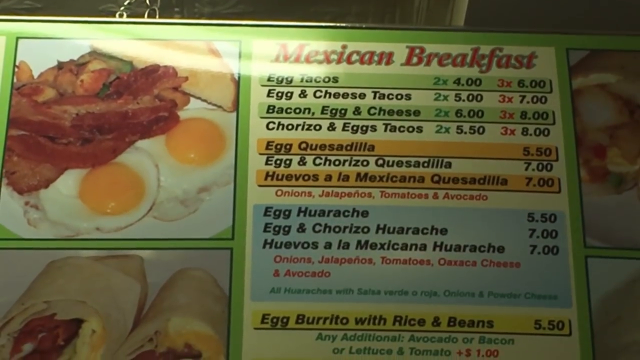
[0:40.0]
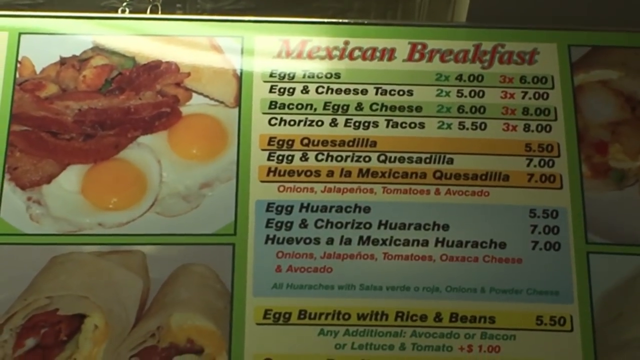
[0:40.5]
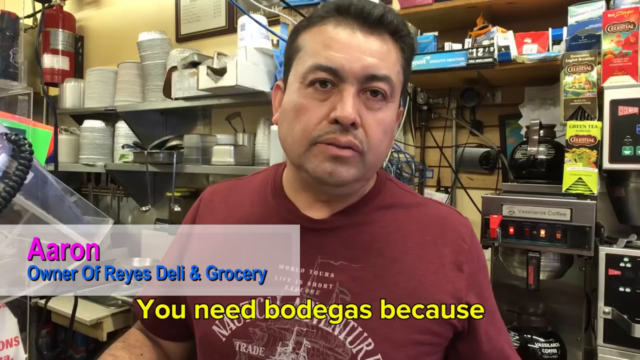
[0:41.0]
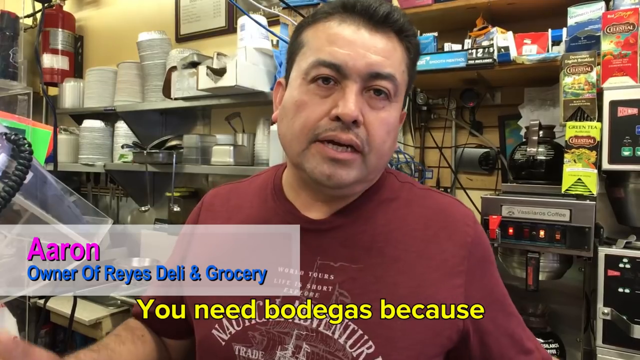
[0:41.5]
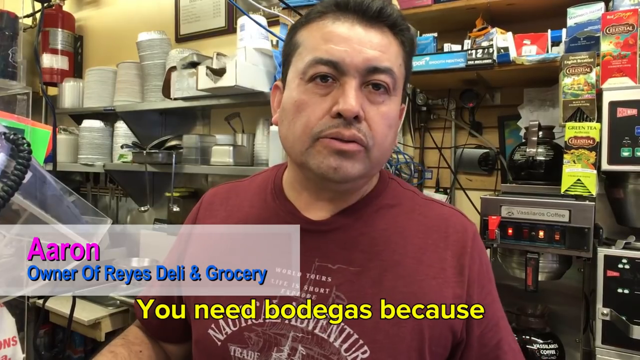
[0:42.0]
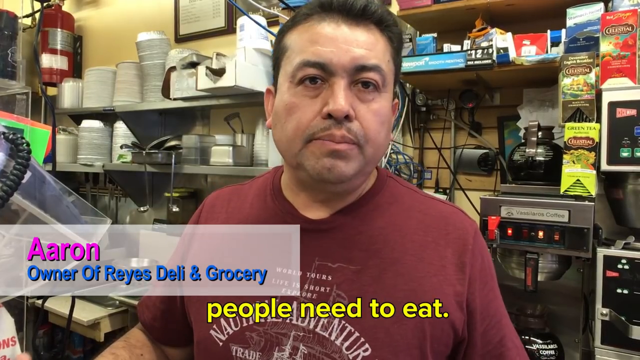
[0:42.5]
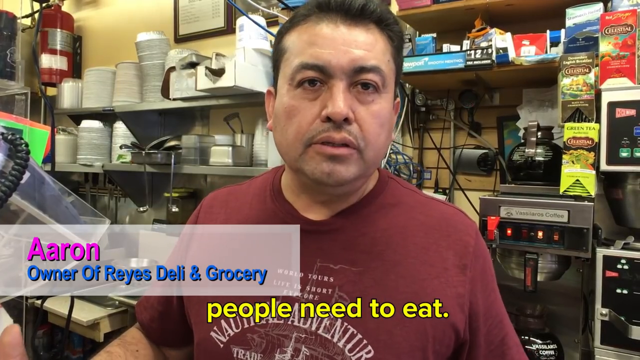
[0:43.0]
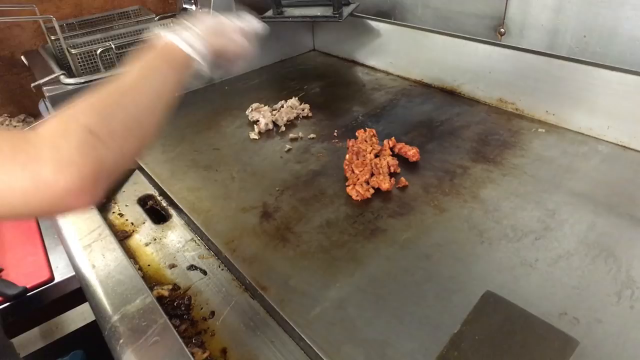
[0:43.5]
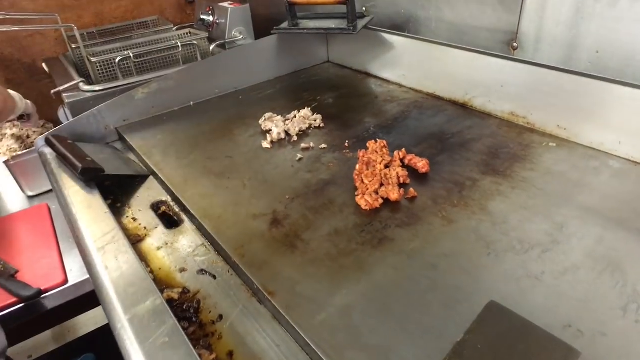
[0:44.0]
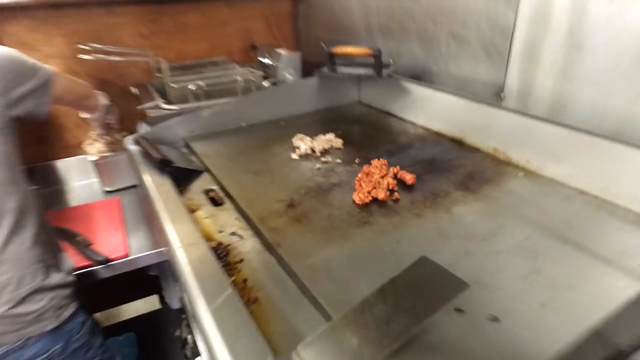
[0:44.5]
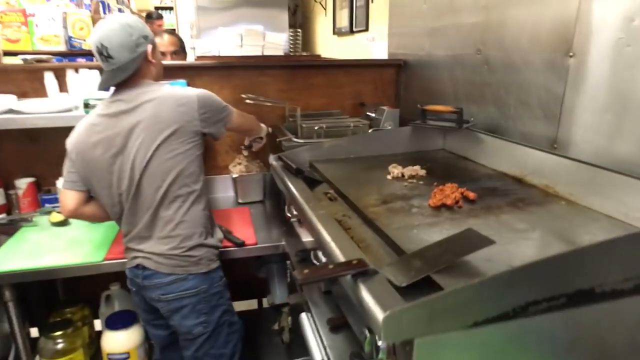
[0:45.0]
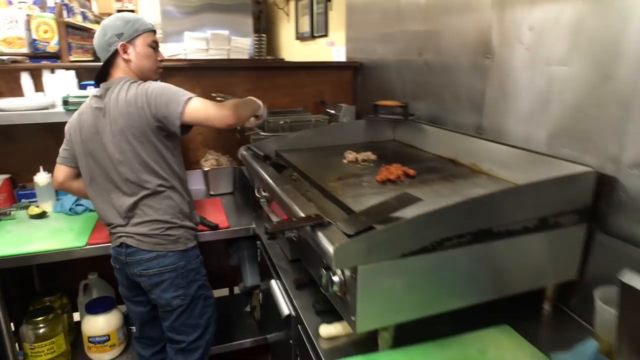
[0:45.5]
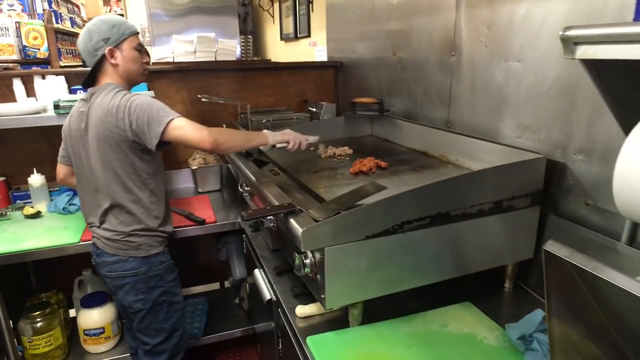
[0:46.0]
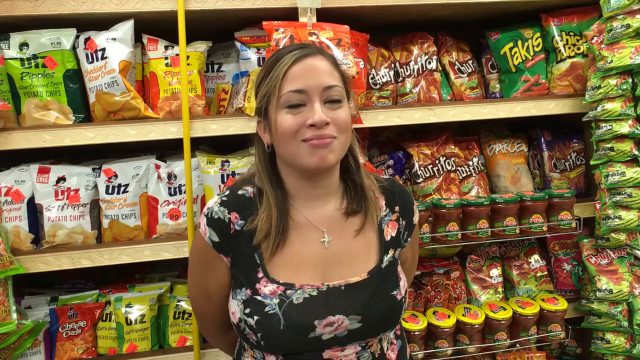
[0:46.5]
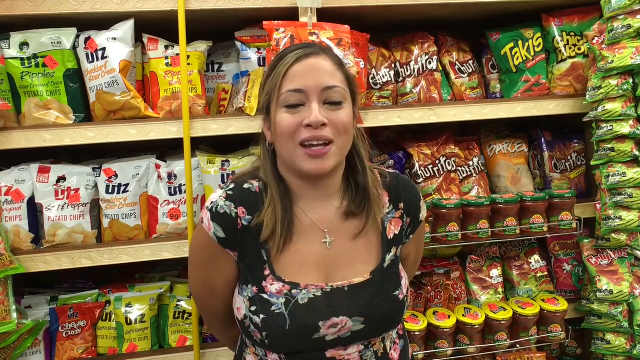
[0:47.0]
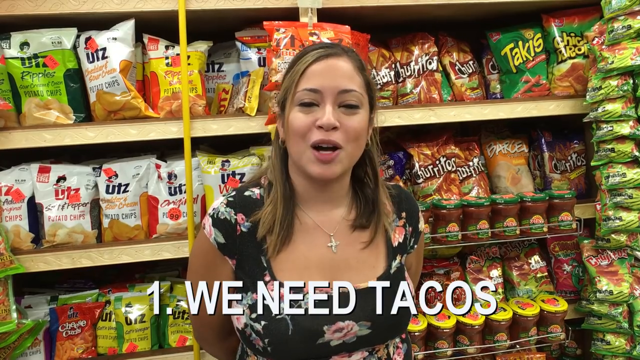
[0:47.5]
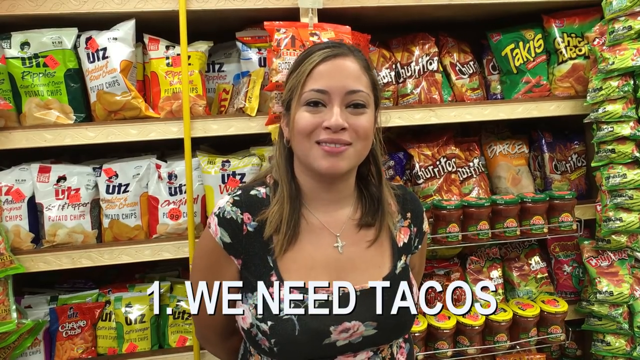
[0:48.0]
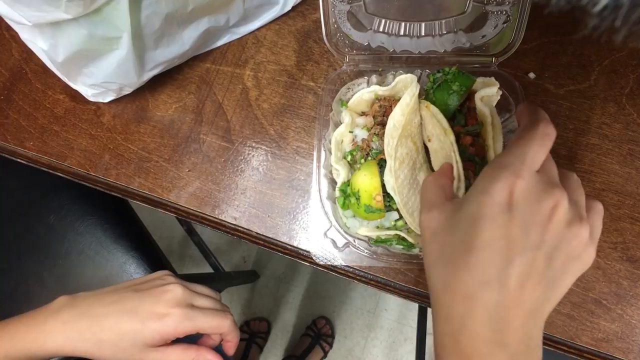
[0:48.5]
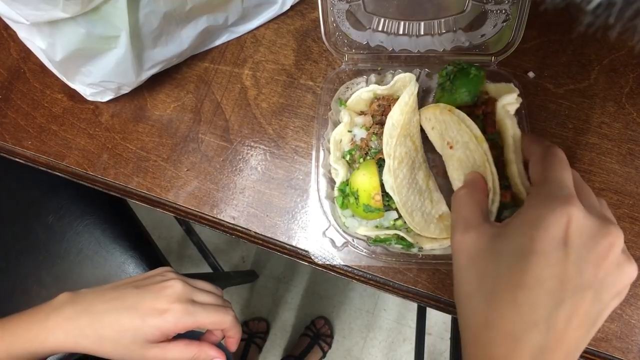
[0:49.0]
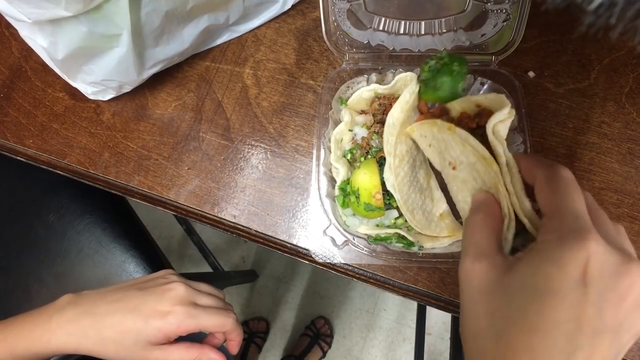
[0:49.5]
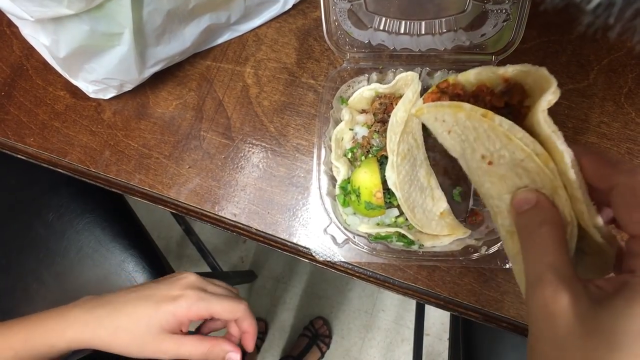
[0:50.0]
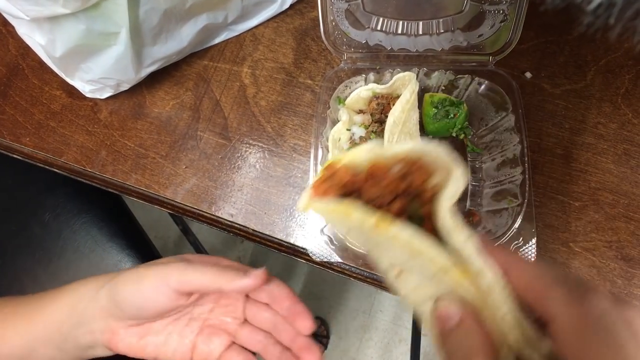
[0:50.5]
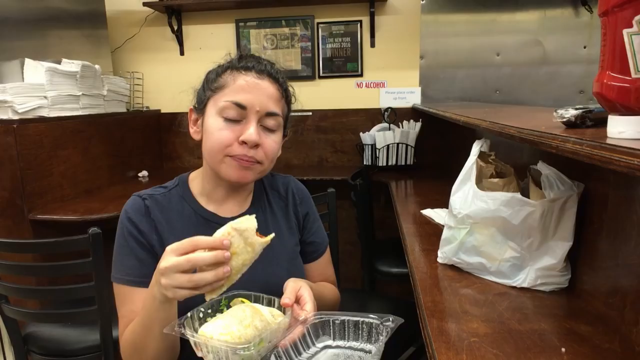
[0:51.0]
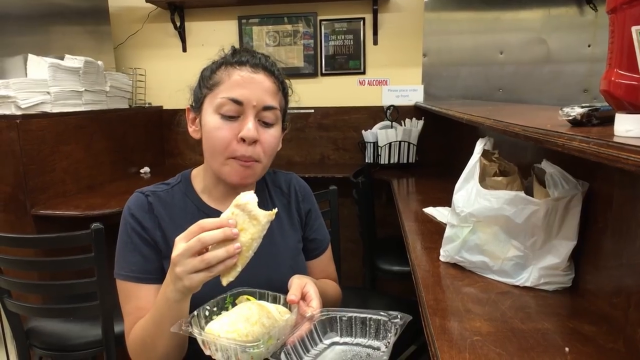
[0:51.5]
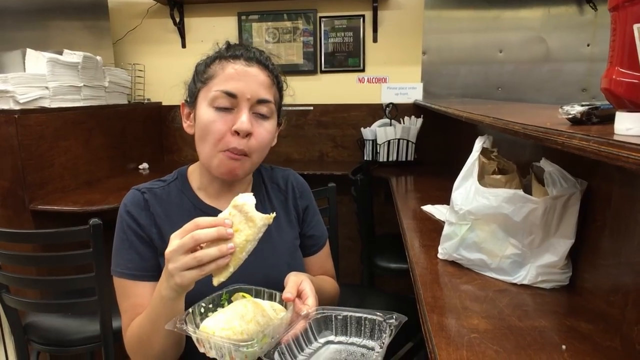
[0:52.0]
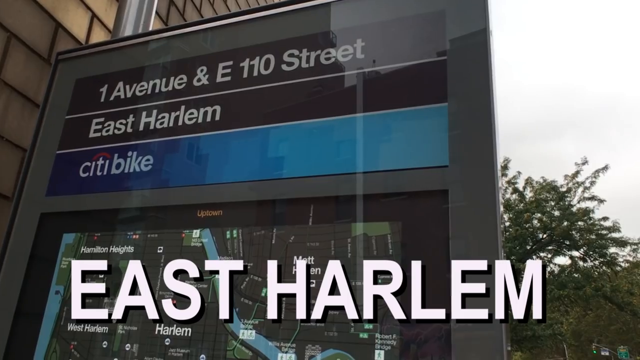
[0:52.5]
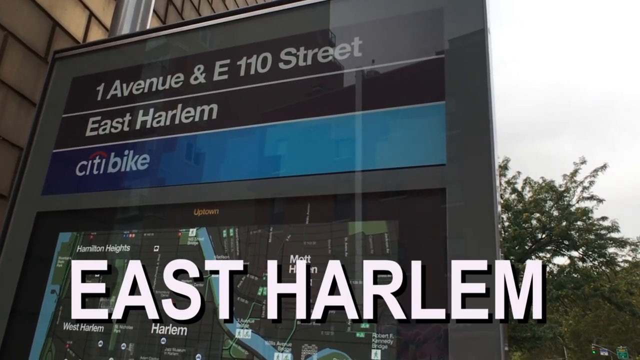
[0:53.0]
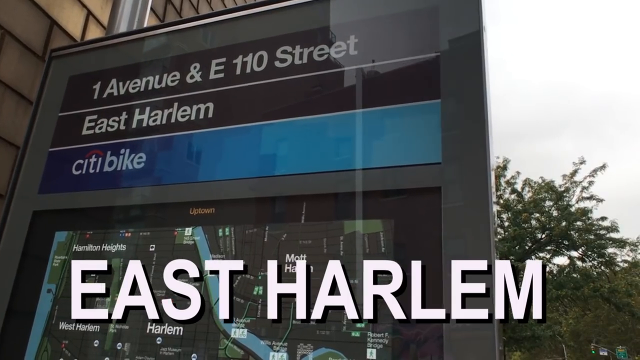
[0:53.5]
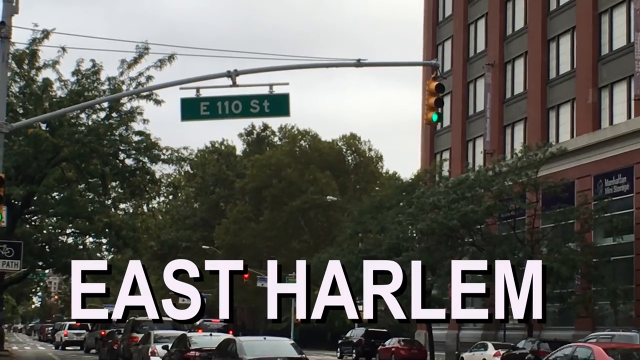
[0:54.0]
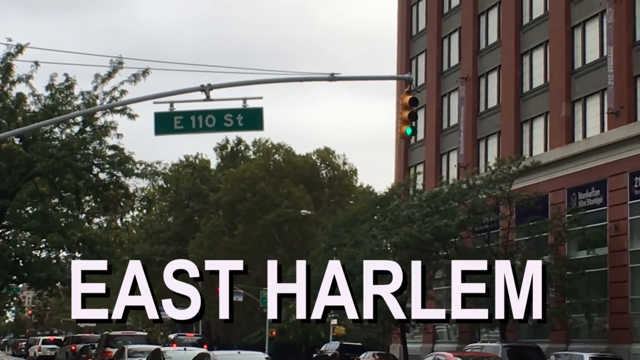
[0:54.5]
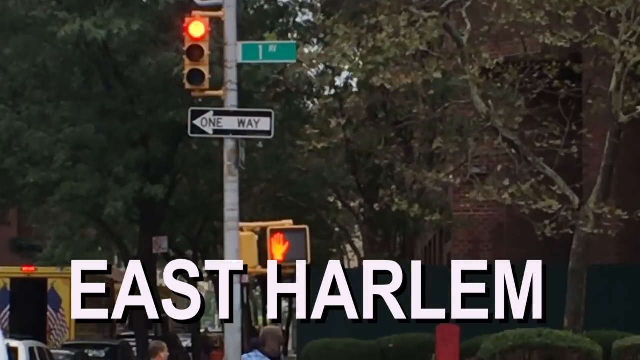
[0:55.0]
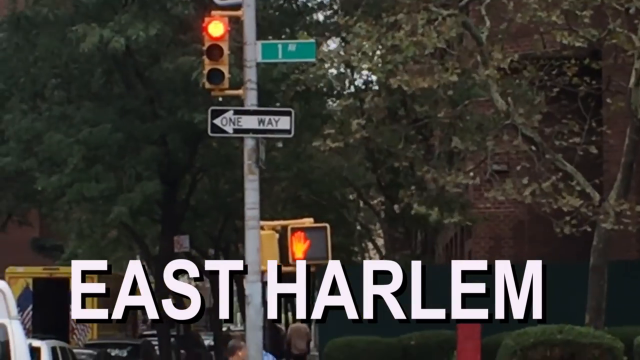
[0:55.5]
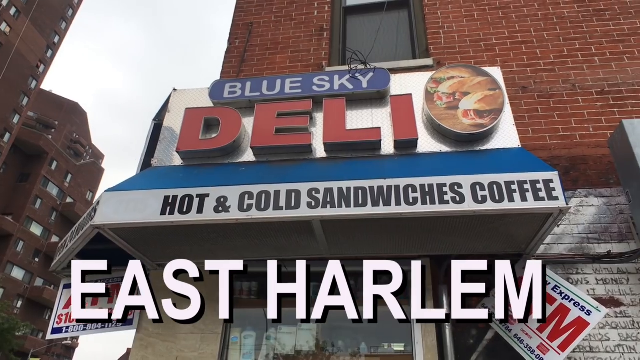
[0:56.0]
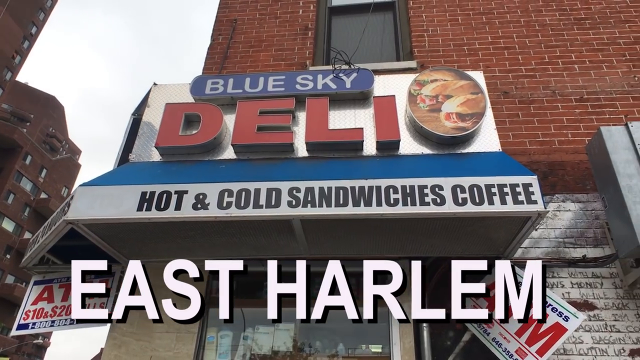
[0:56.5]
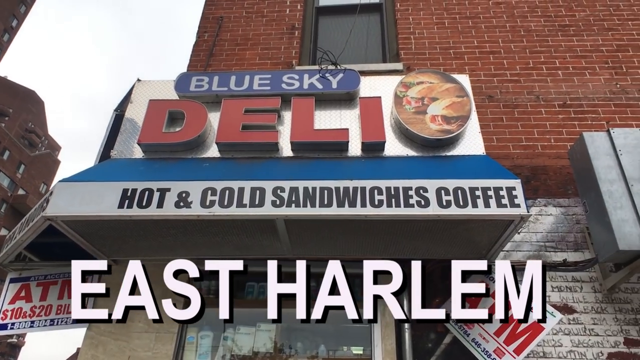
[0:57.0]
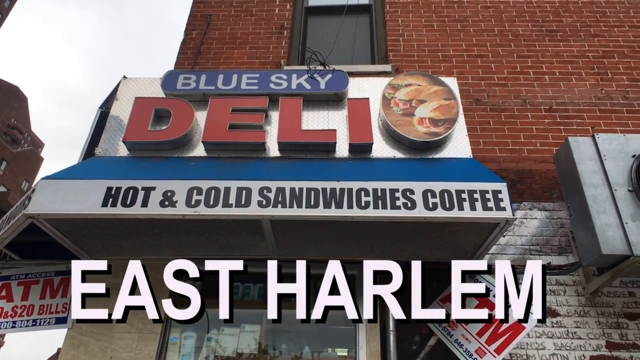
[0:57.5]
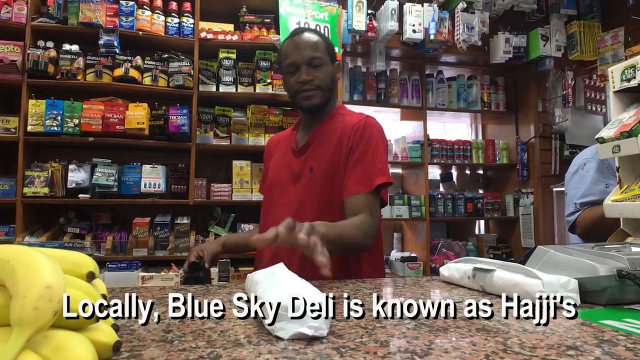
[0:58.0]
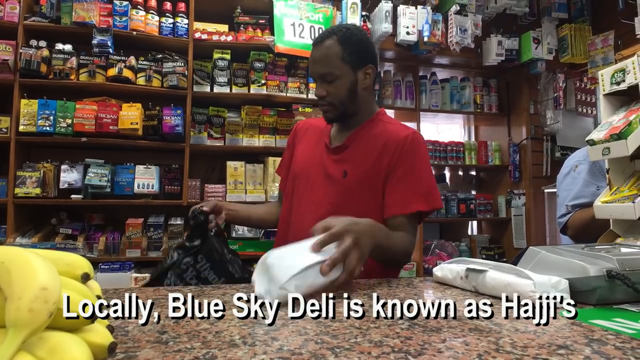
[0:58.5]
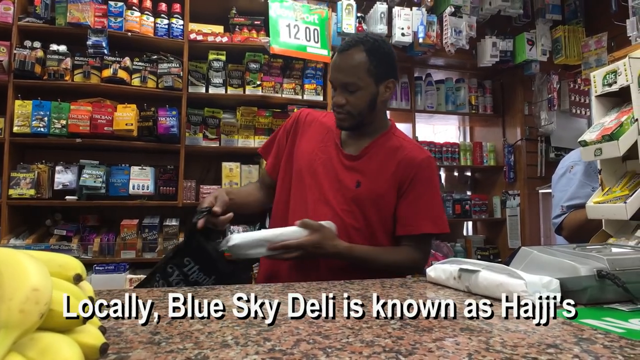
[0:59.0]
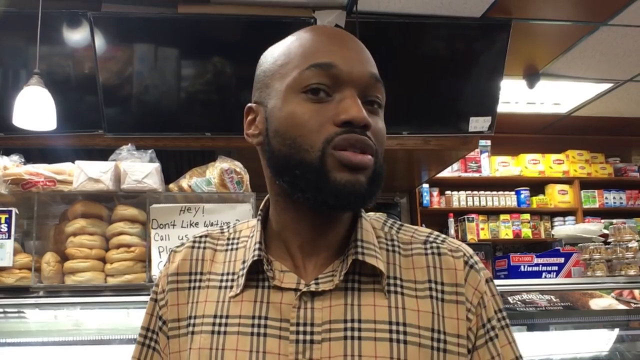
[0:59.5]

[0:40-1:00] The Mexican breakfast board lists egg tacos and egg and cheese tacos among a list of food. The owner of Race Delhi and Grocery appears, wearing a maroon T-shirt with white writing; his name is written in purple and "owner of Race Delhi and Grocery" in blue. Bags, takeaway items, machines and groceries are shown. A guy wearing blue jeans, a gray t-shirt and a gray hat fries food. A lady in a dress with flowers appears, and "we need tacos" appears in capital letters. The scene shifts to food that is a wrap, and a lady eats the wrap. "East Harlem" appears in white letters, and street boards read "110" street, East Harlem, alongside a City Bike. A sign shows "deli" and "hot and cold" against a blue sky. The scene shifts to a man putting something inside.